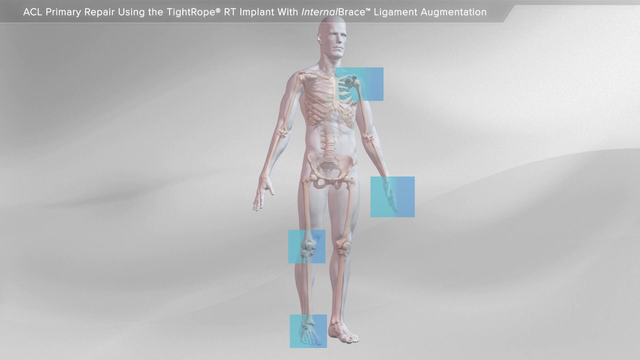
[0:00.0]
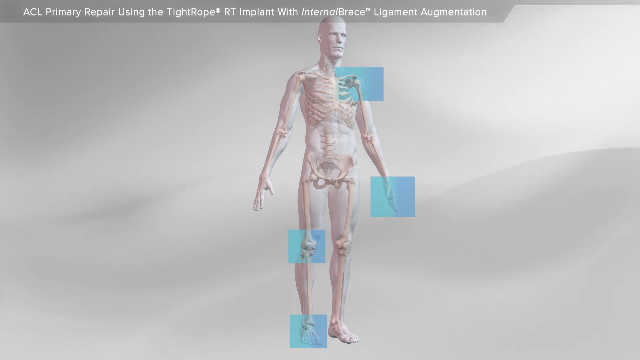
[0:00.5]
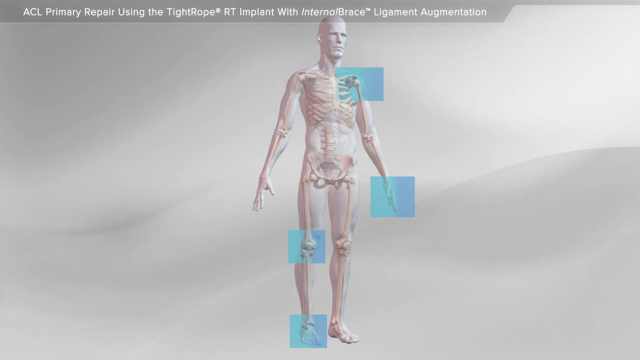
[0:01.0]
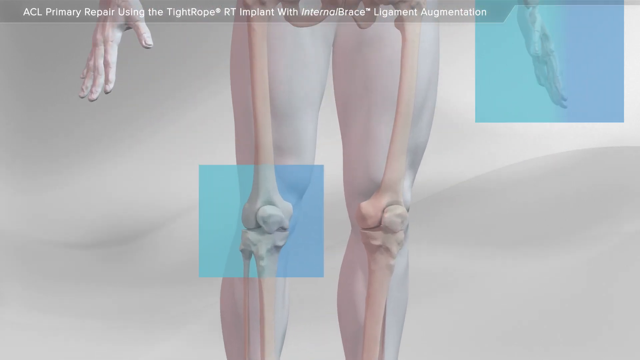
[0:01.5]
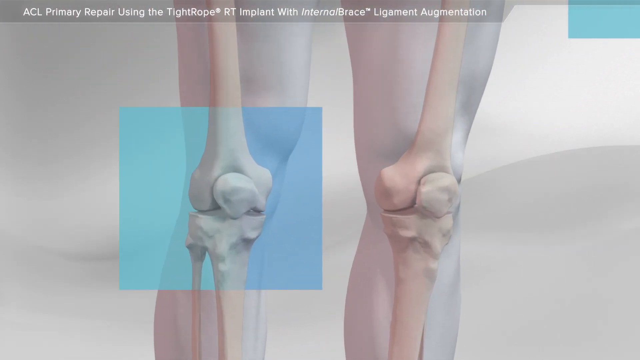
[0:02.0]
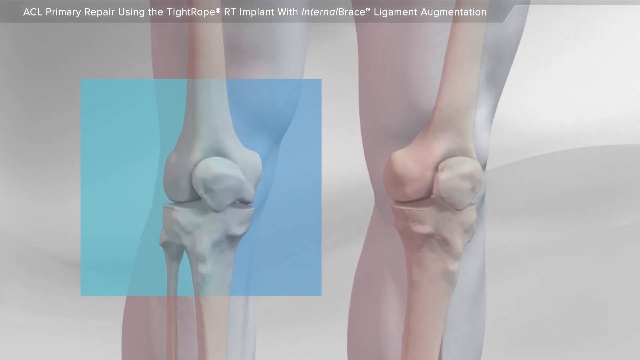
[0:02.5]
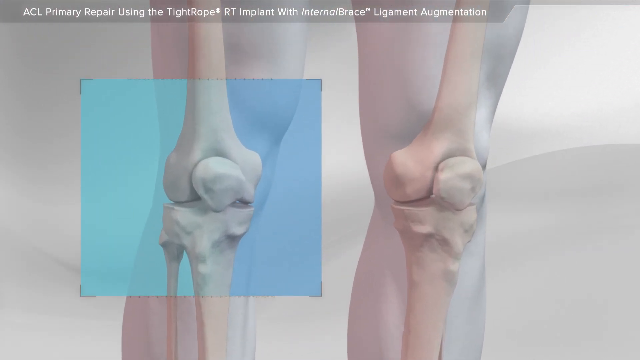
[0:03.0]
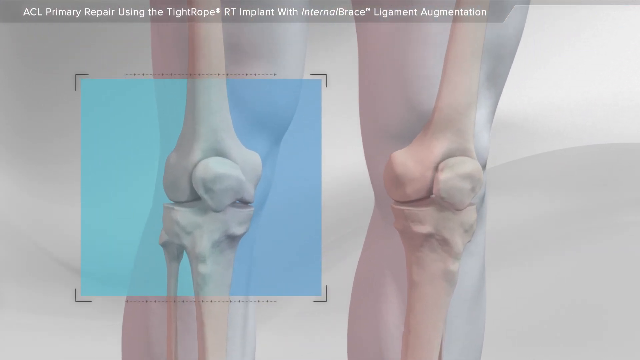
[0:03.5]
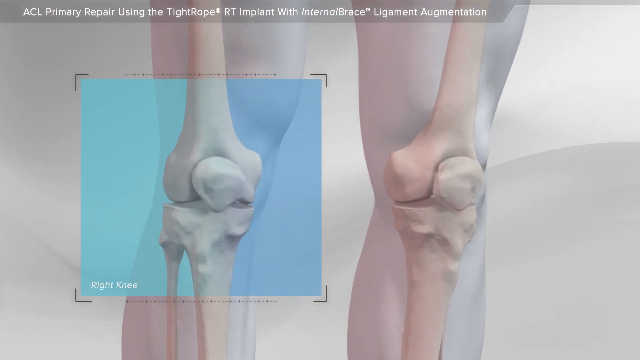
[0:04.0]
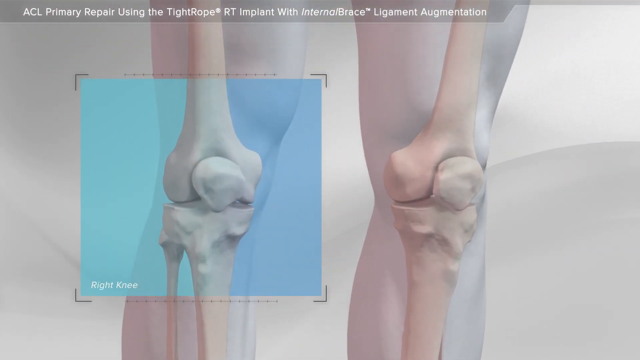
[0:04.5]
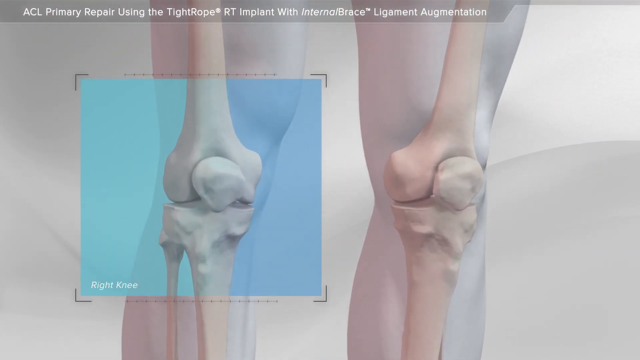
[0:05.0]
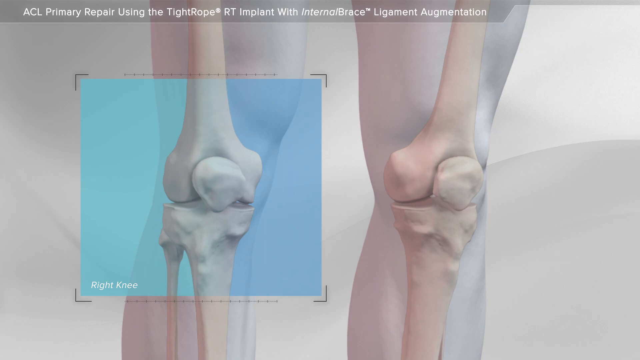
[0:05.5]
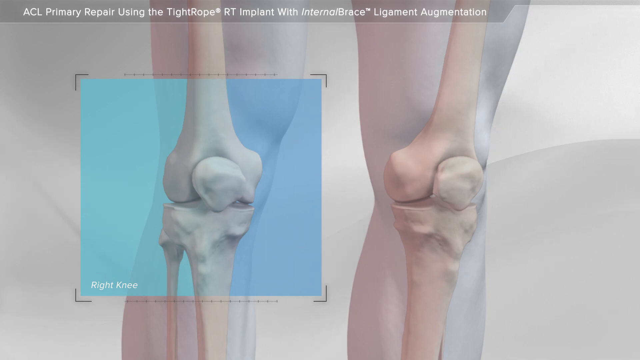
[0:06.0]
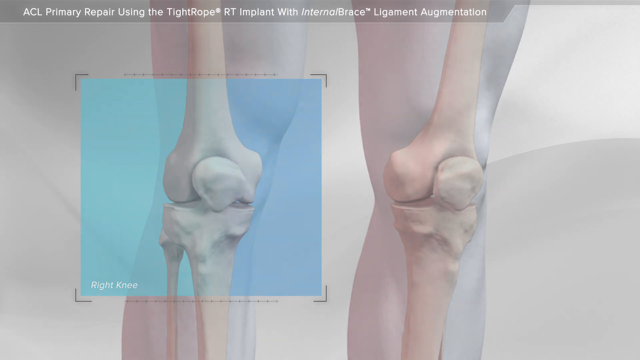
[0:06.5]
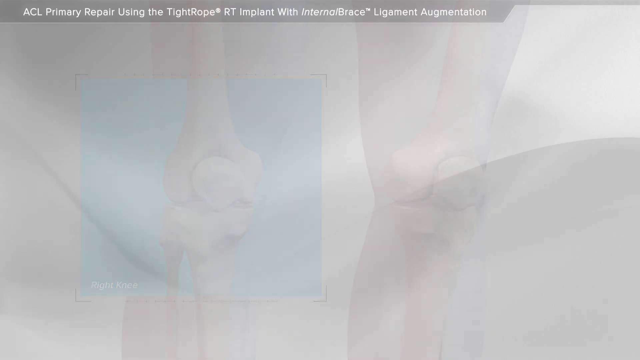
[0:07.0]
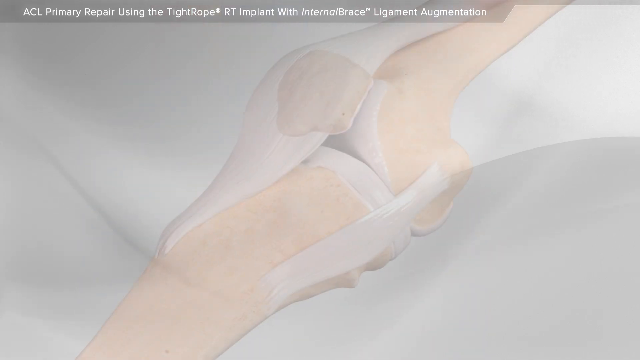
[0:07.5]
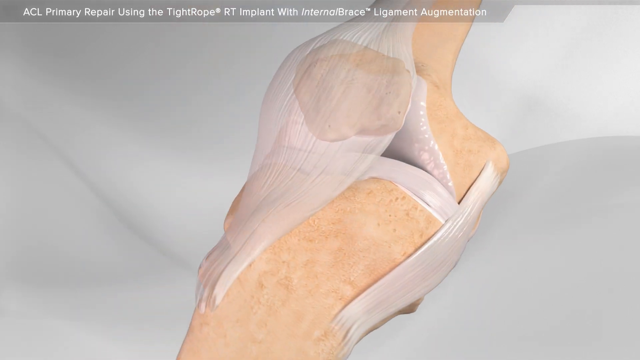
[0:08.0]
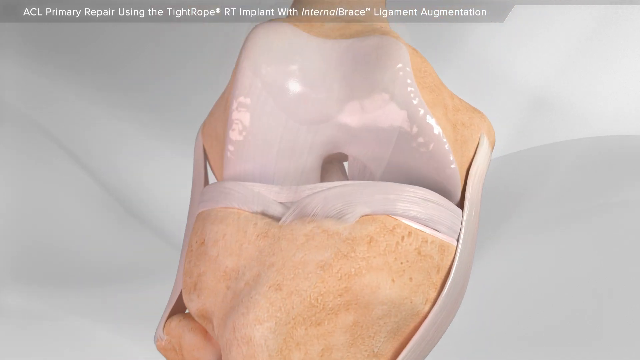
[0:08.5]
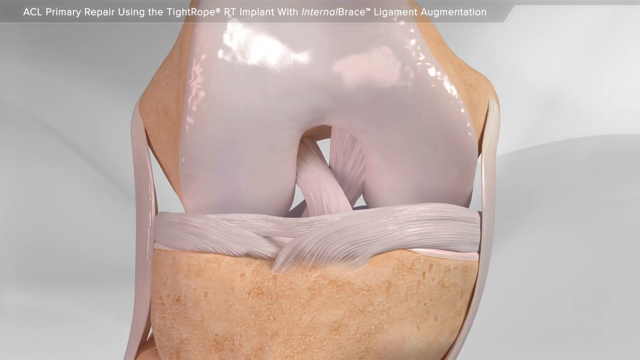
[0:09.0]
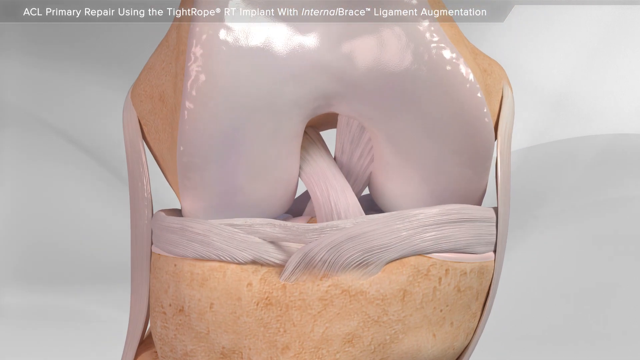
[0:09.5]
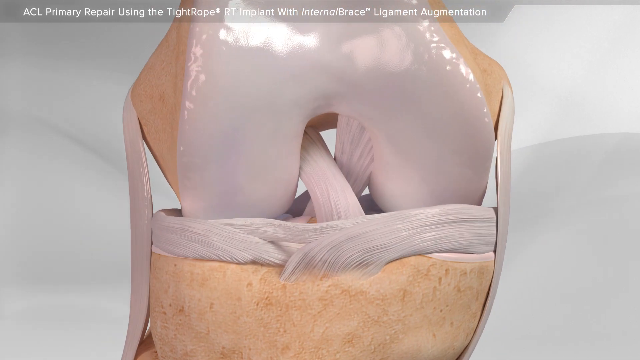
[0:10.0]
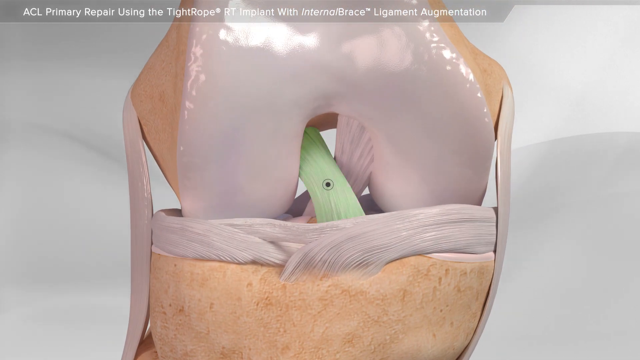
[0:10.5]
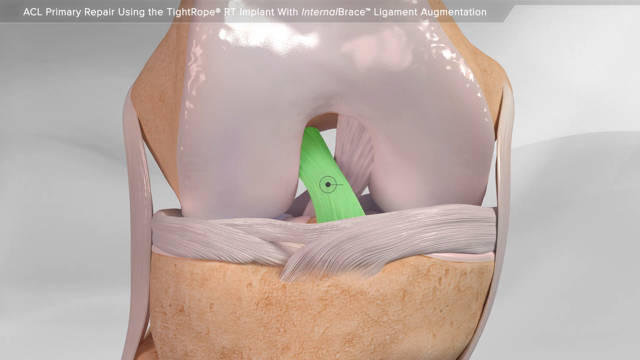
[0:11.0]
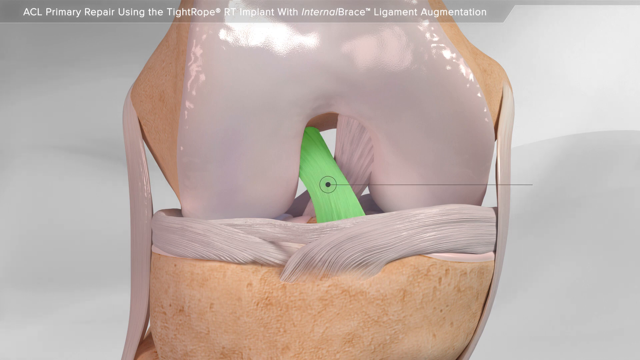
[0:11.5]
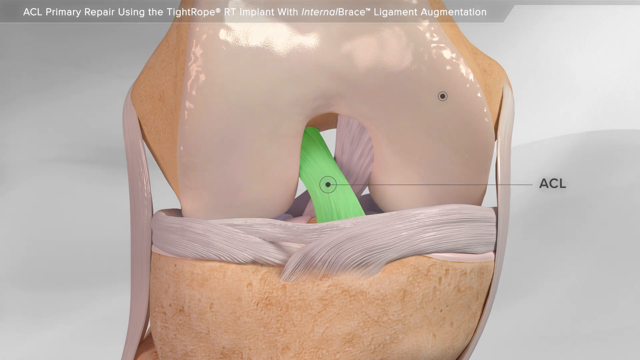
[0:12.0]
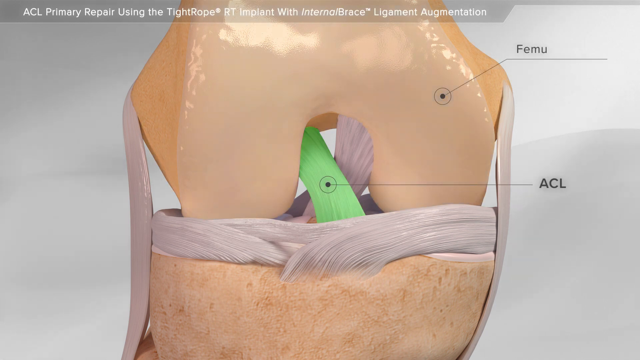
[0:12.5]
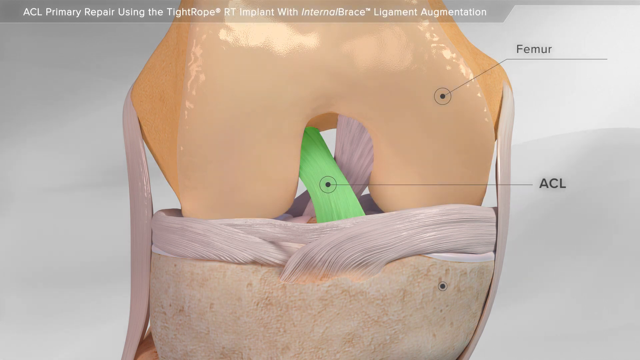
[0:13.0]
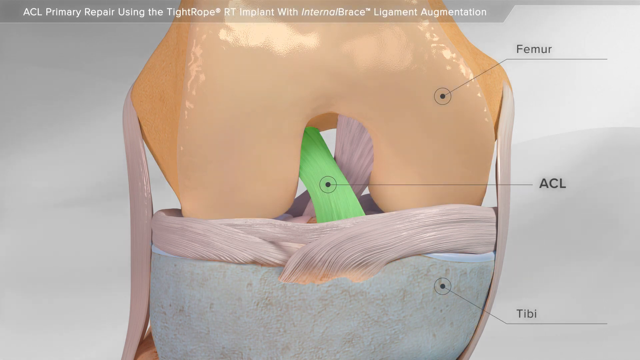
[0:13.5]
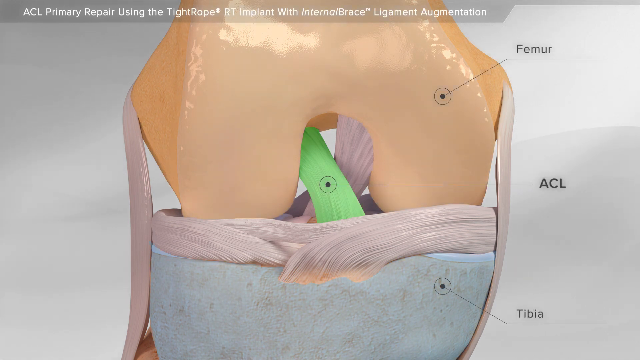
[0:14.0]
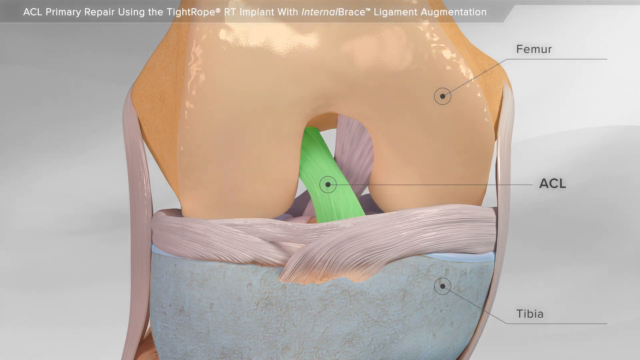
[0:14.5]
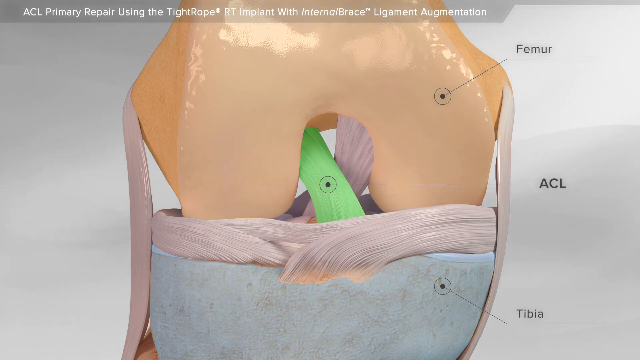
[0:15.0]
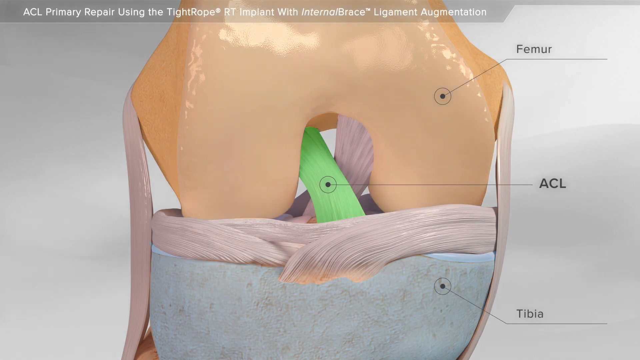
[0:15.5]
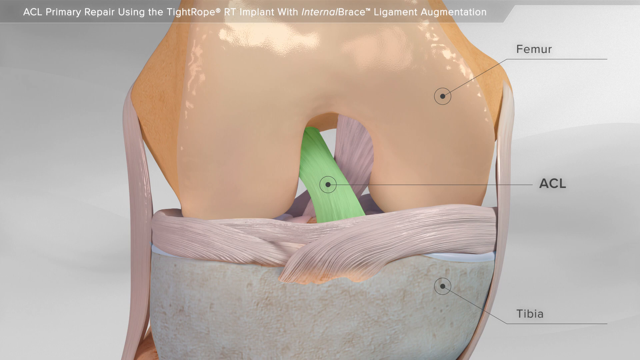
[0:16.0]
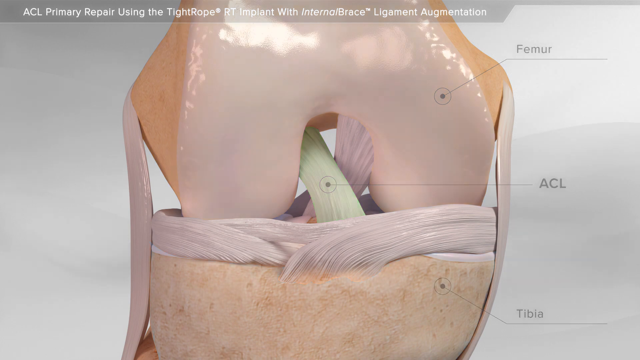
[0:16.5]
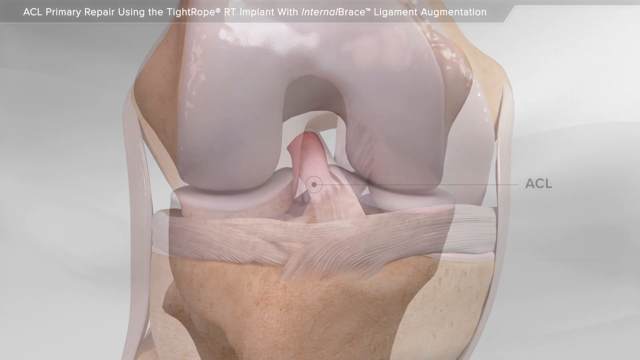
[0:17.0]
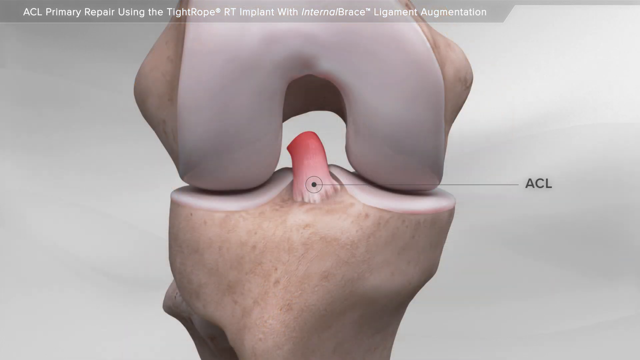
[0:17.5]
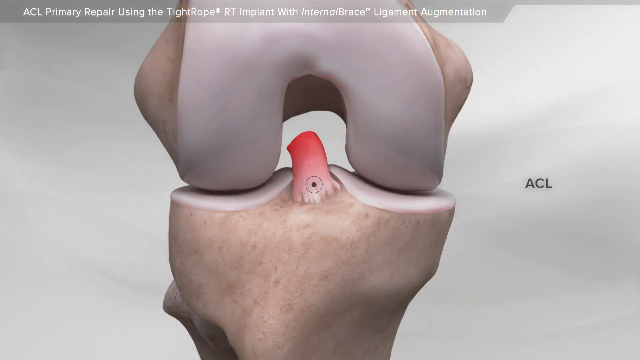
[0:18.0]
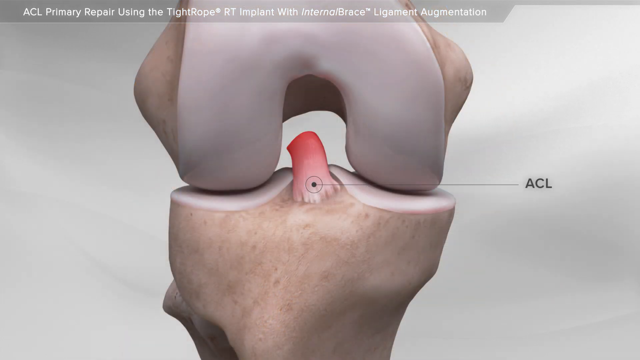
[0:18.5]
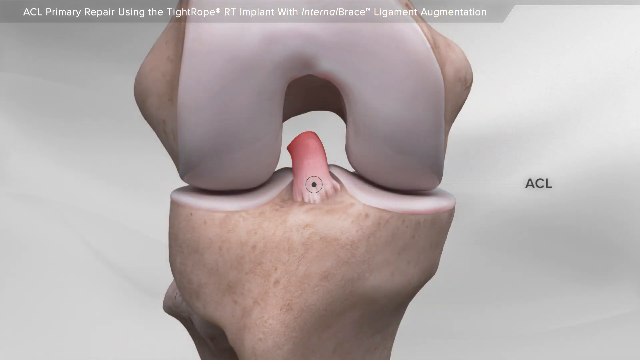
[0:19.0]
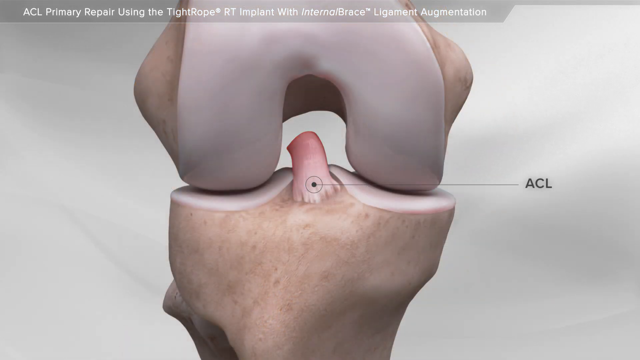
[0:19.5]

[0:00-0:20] The video opens on a gray background with what appears to be a standing skeletal system, with light blue boxes on certain areas of the skeleton. The camera zooms into one of the knees, showing the bones and joints a little closer up. The video then moves to a different view of bones and joints in which the ligaments inside the joints are visible. Text up top reads "ACL primary repair using the tight rope RT implant with internal brace ligament augmentation." An area on the bone and ligament turns green, with a line going to it labeled with the letters "AC." Other areas are then added and pointed to, one labeled "femur" and the other "tibia."